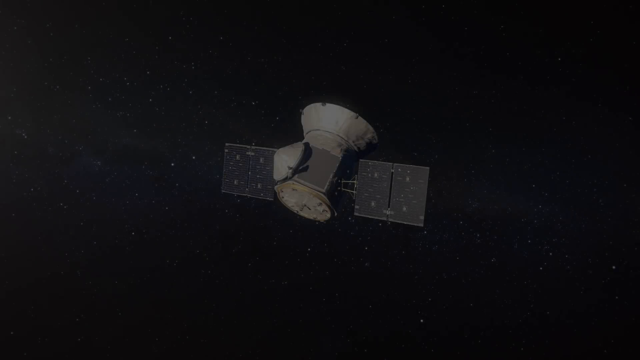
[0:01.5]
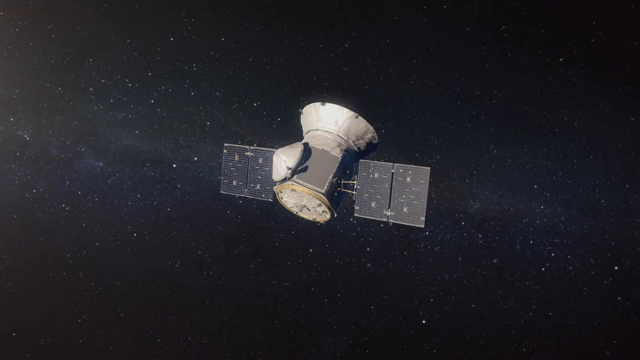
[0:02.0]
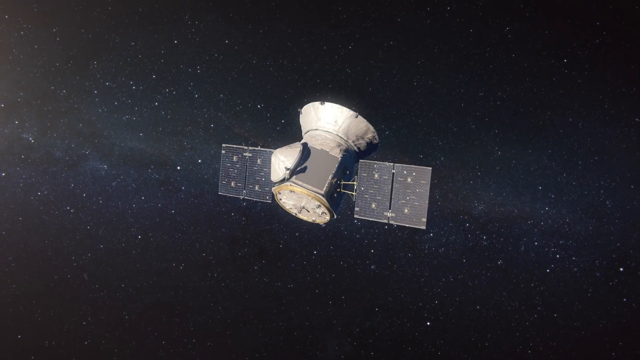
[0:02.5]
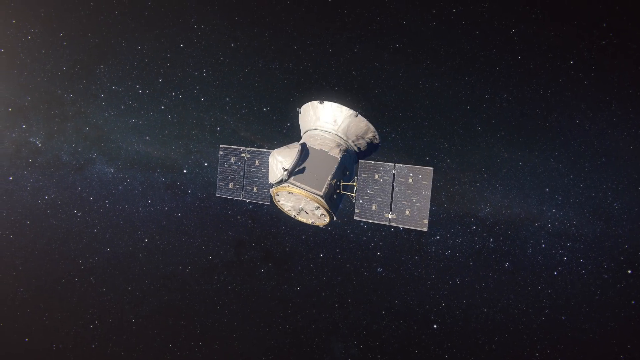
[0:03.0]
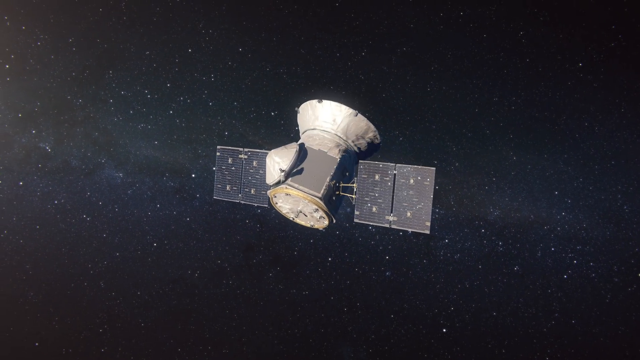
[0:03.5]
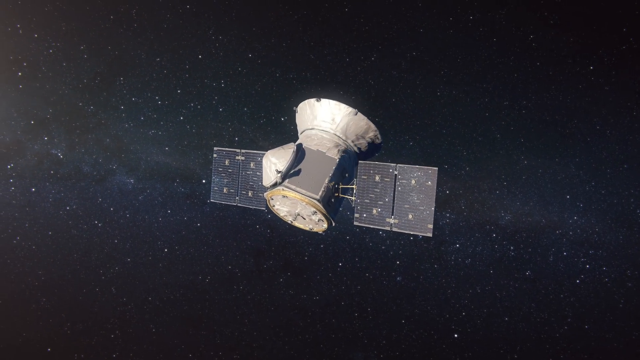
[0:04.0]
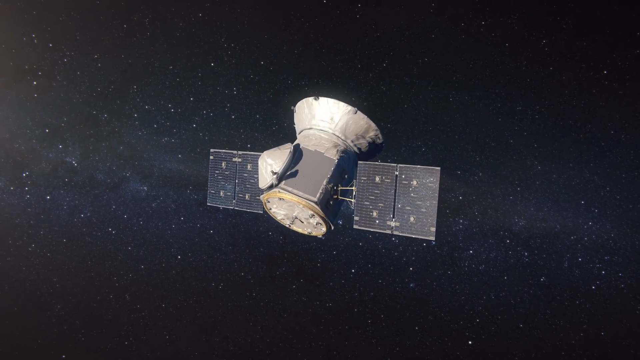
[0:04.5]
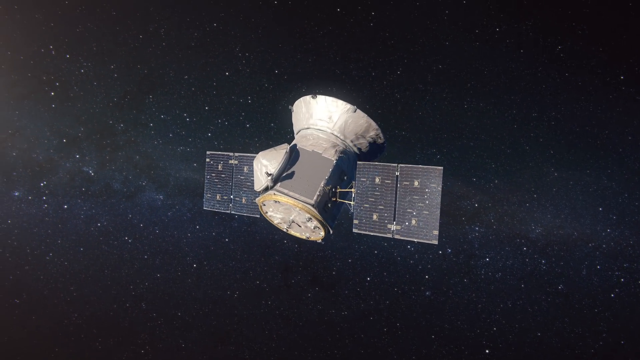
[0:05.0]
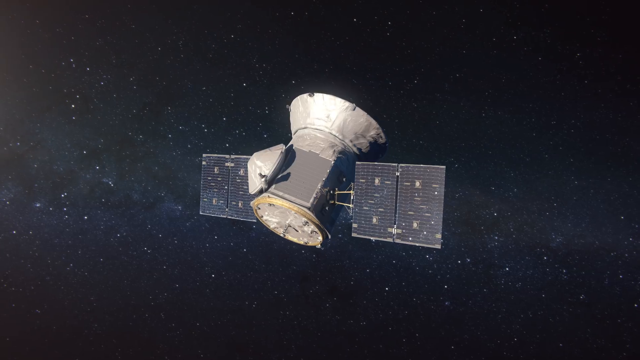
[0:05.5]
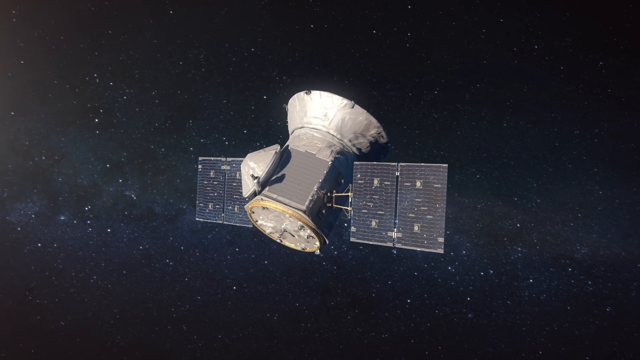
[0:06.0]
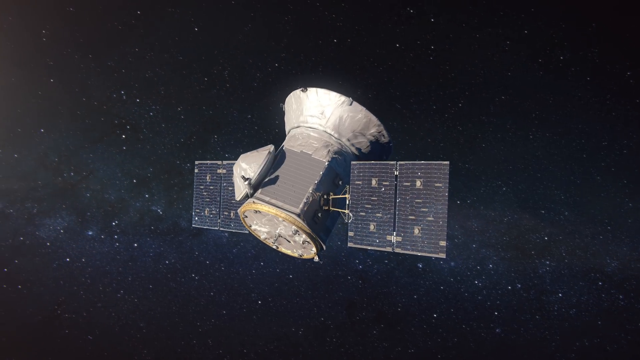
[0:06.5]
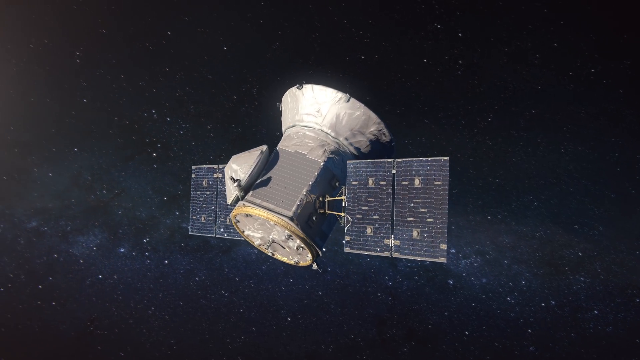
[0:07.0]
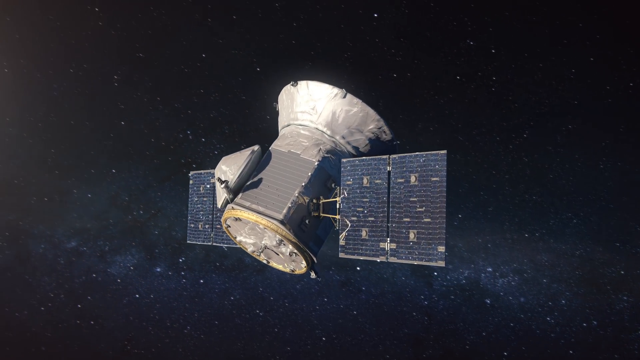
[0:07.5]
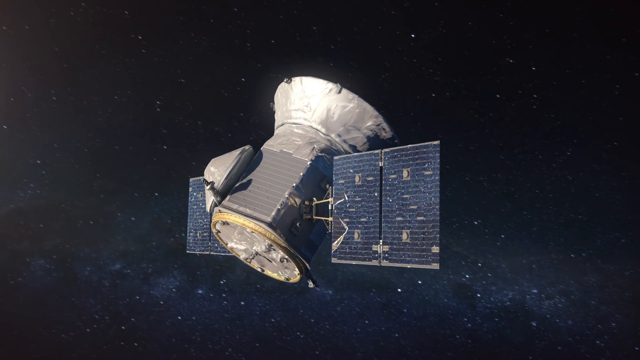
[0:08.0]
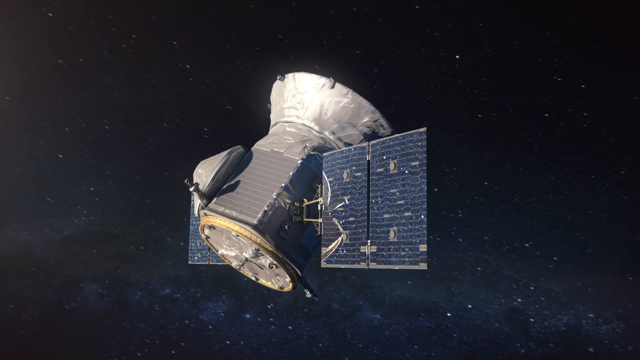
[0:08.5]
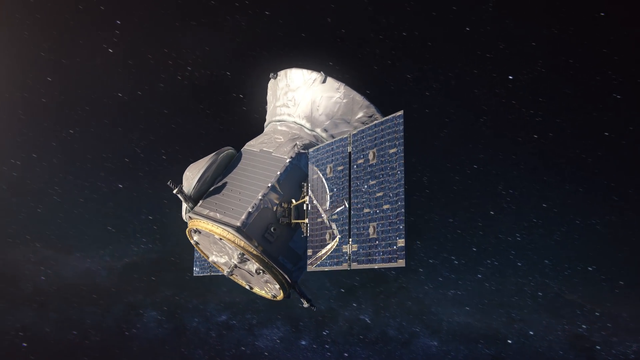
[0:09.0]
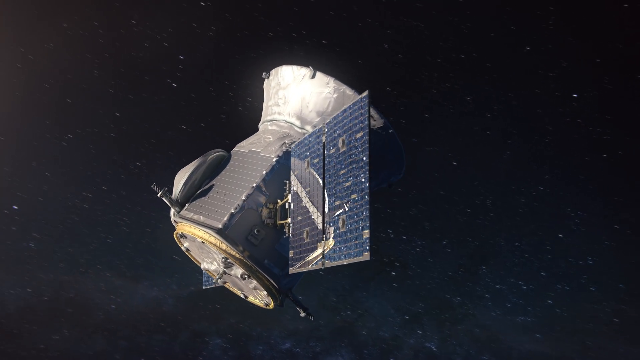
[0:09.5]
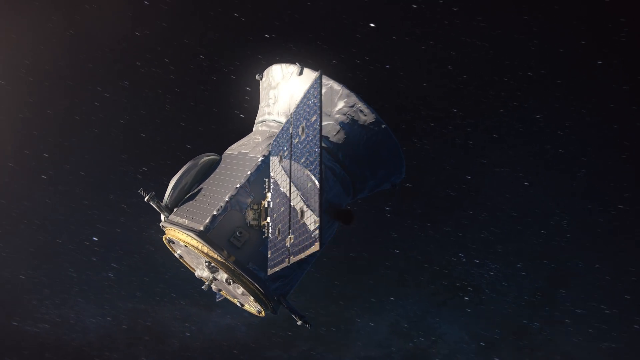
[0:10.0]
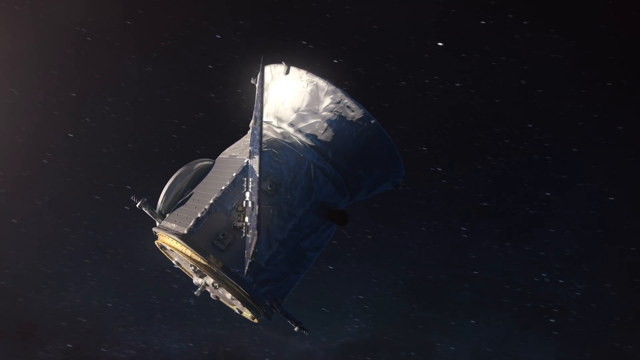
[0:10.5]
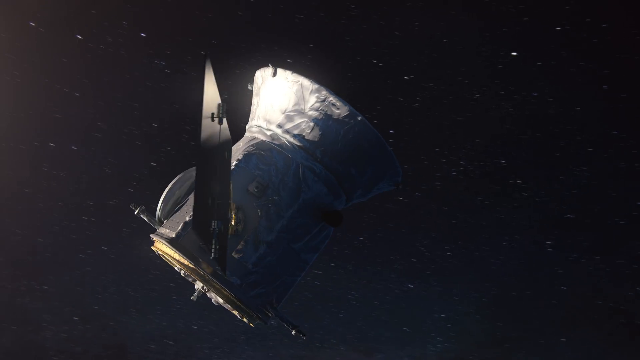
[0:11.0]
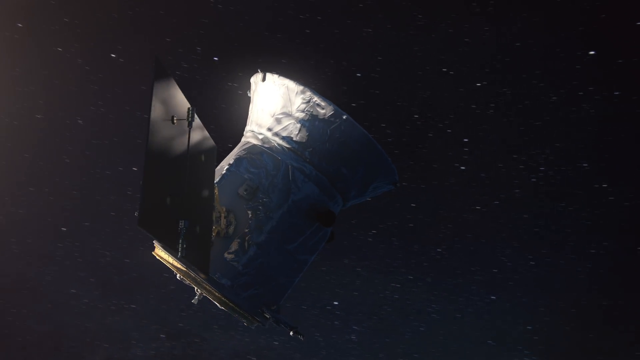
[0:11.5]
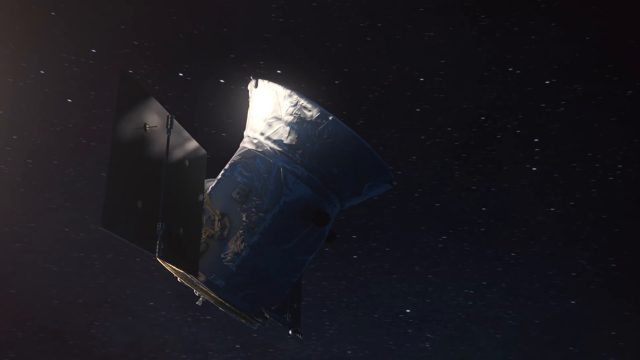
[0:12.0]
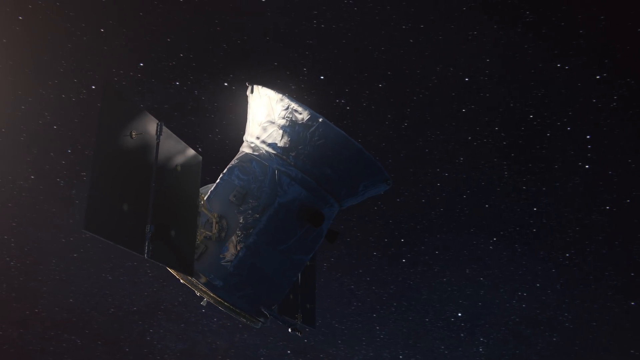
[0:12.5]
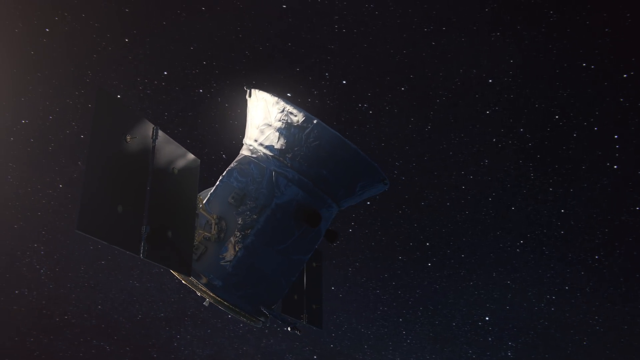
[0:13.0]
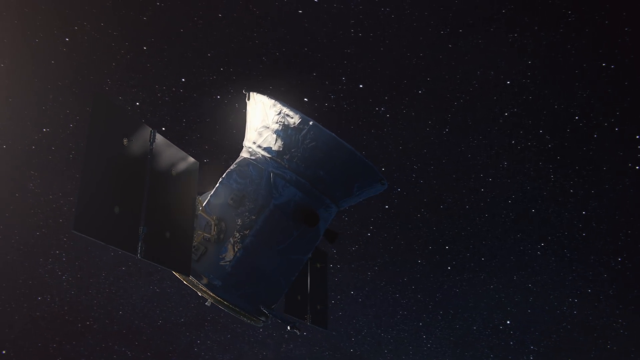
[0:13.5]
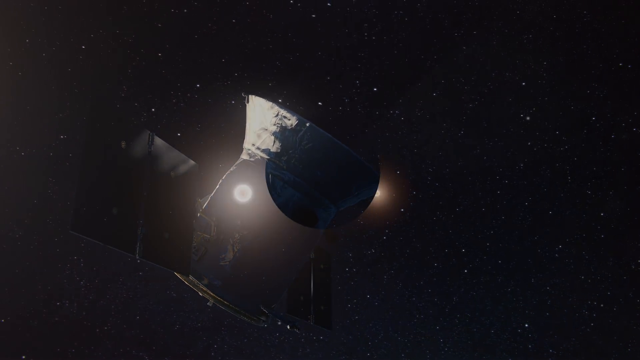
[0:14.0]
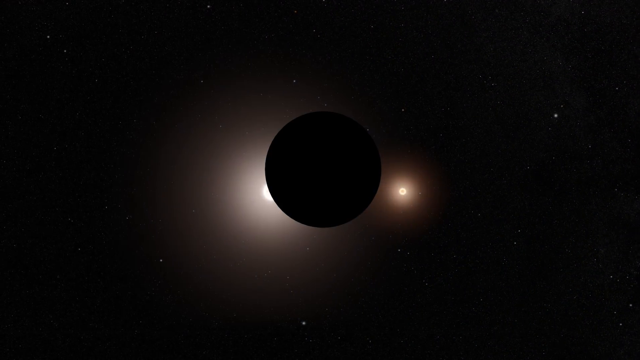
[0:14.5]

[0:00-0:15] An animation shows a satellite floating in outer space. Its main body is a square-sided cylinder, and it has two grey wings that look like panels, one on either side. Stars appear as white dots in the surrounding space. The satellite floats at a slow speed, comes closer to the camera and continues on its journey. The closer view reveals grooves on the round ends of the cylinder. The wings are see-through, so the stars and distant stars in the background are visible through them. As the satellite passes by, what looks like an eclipse appears.